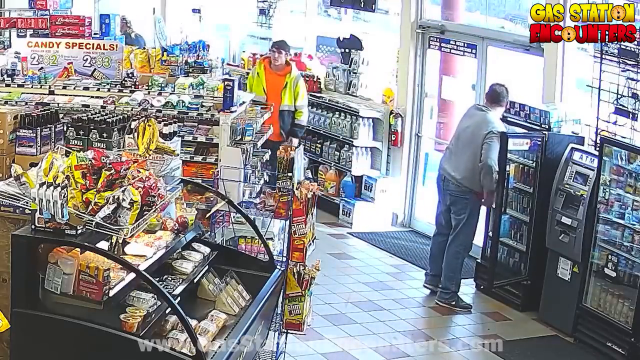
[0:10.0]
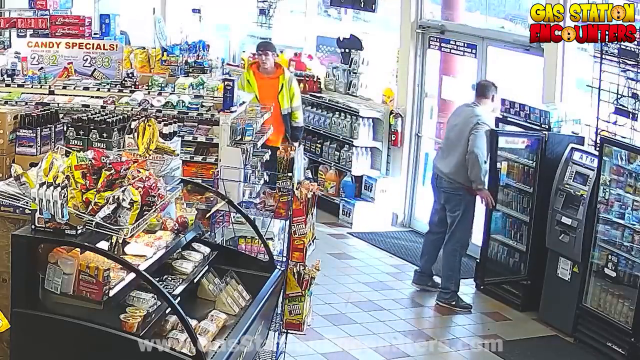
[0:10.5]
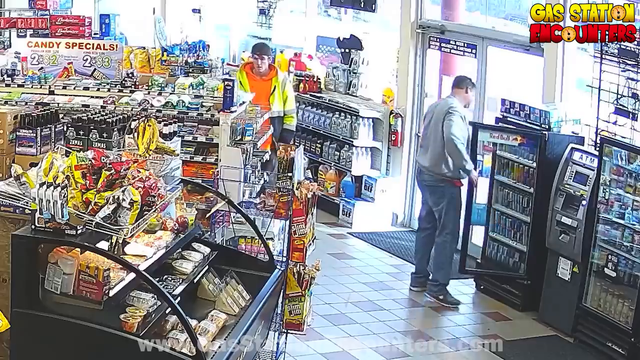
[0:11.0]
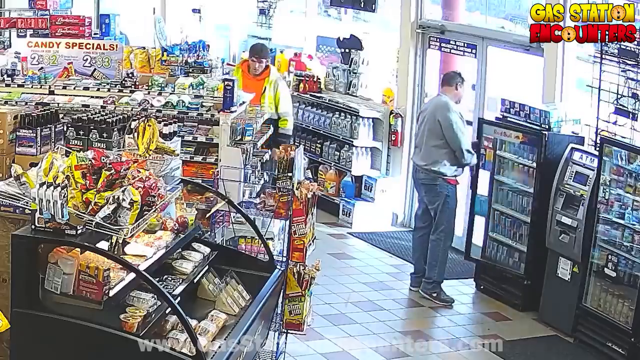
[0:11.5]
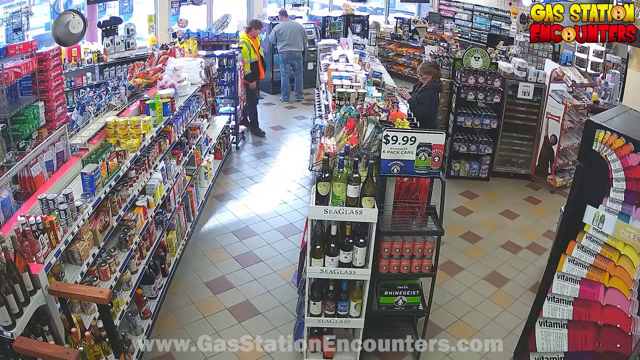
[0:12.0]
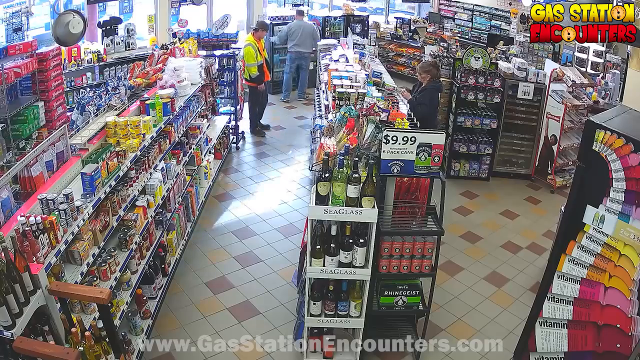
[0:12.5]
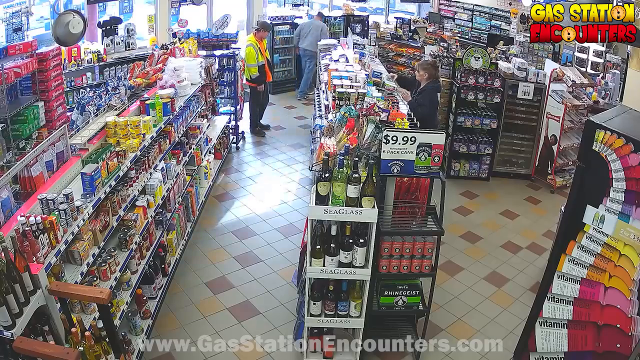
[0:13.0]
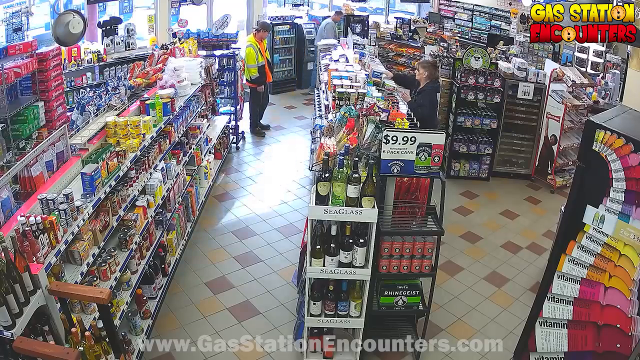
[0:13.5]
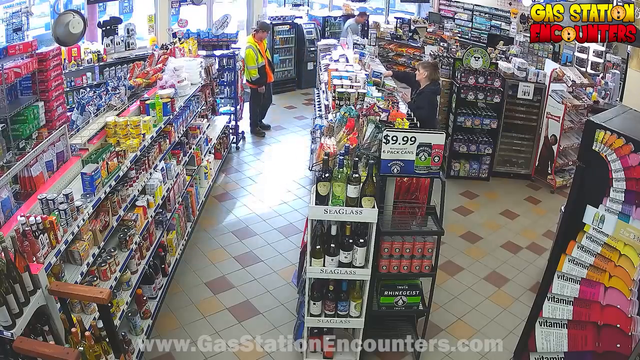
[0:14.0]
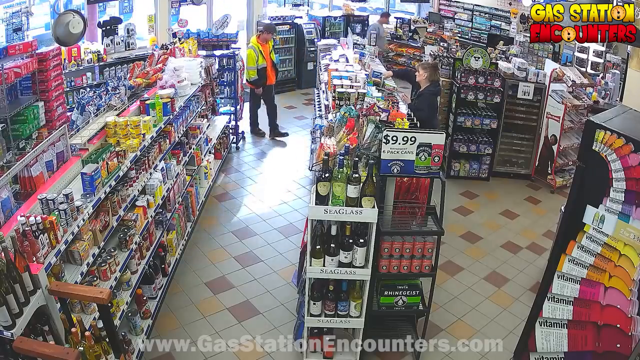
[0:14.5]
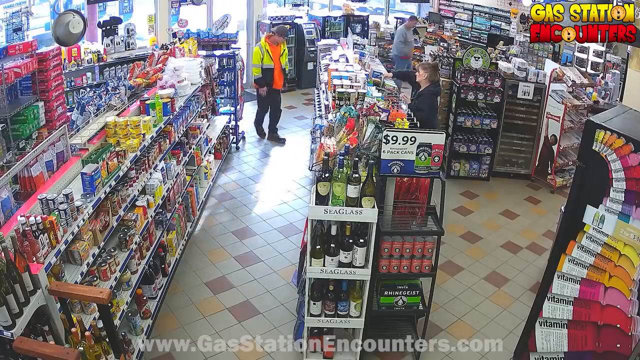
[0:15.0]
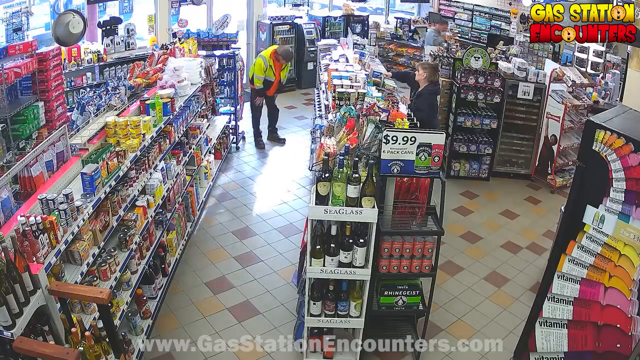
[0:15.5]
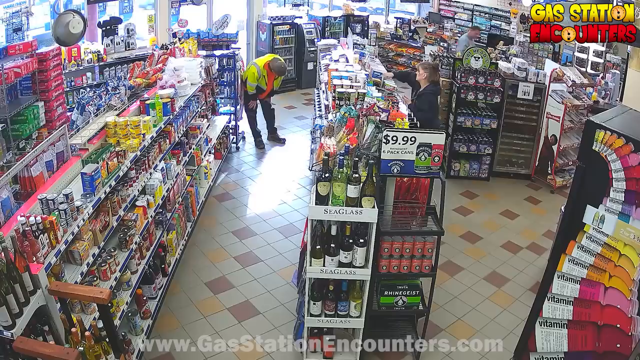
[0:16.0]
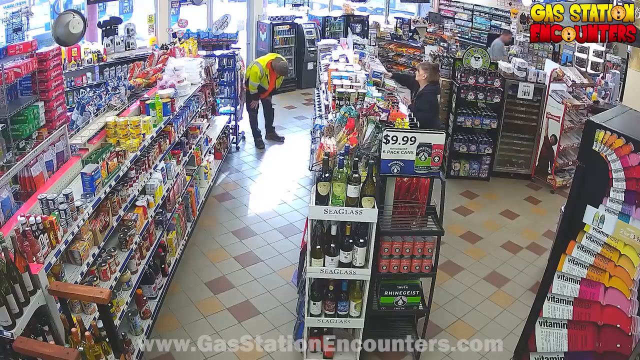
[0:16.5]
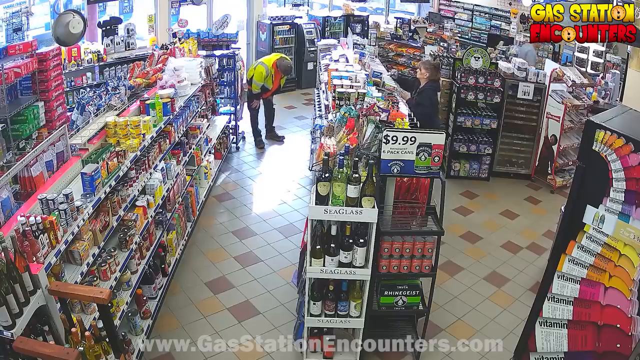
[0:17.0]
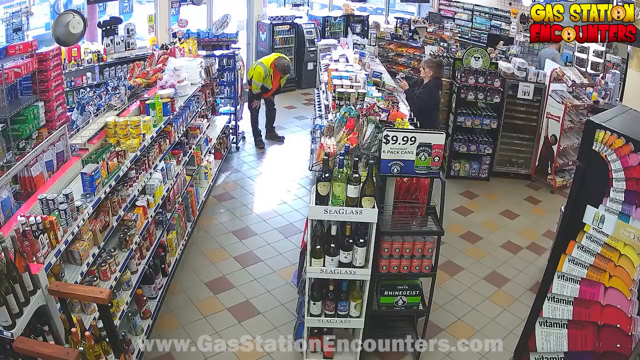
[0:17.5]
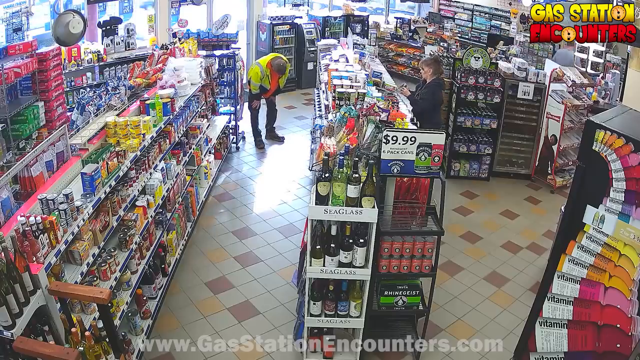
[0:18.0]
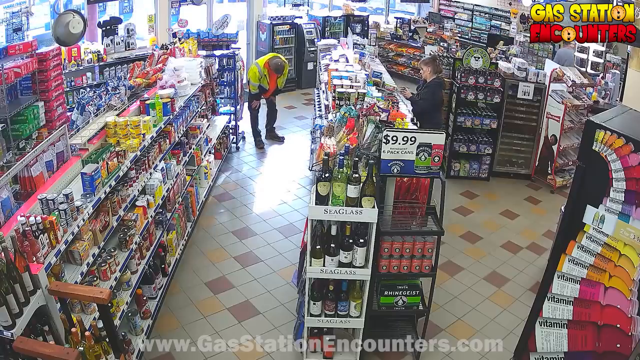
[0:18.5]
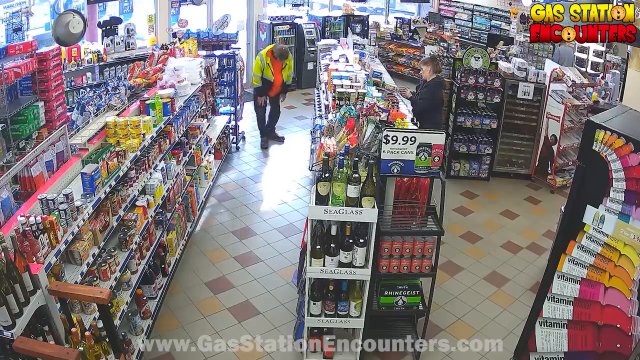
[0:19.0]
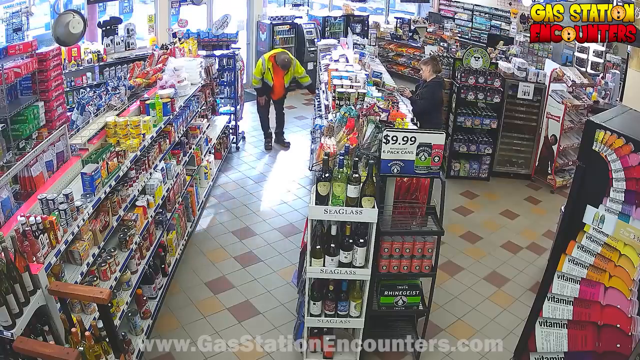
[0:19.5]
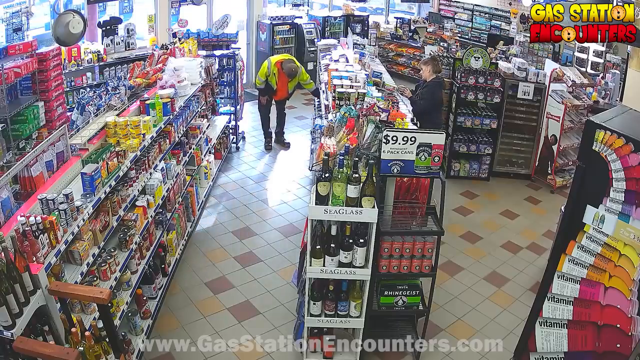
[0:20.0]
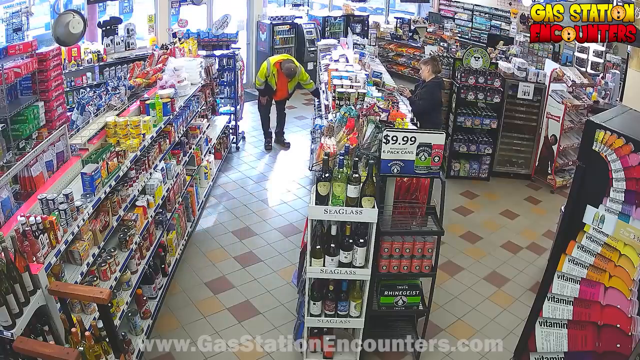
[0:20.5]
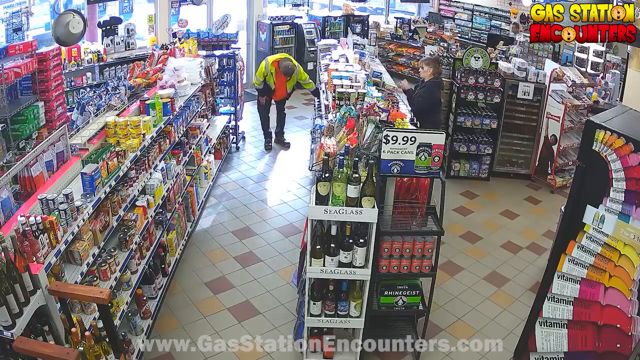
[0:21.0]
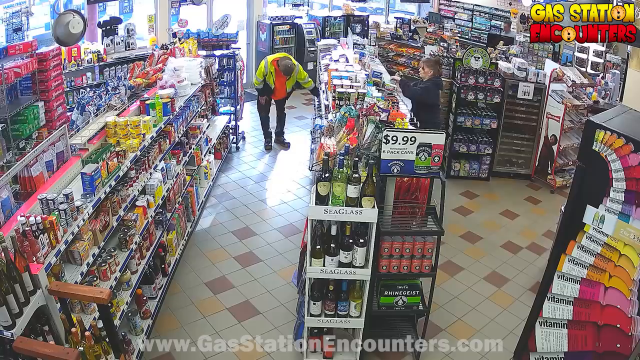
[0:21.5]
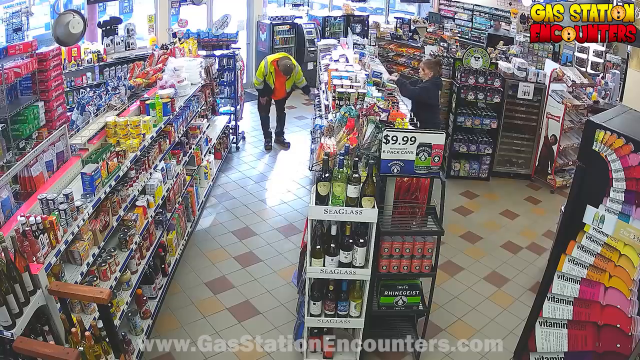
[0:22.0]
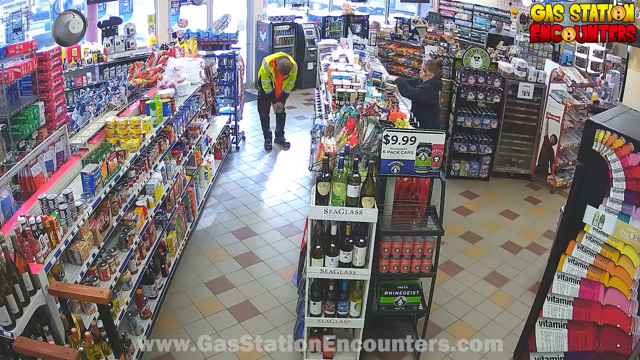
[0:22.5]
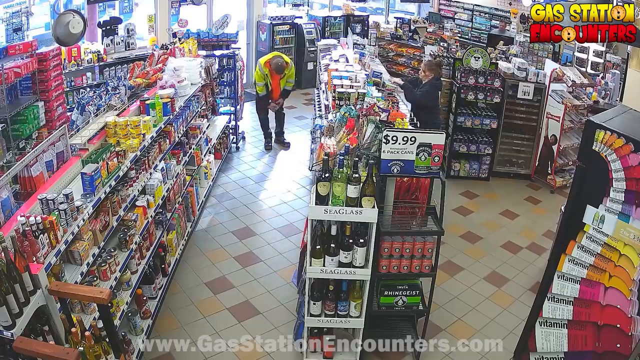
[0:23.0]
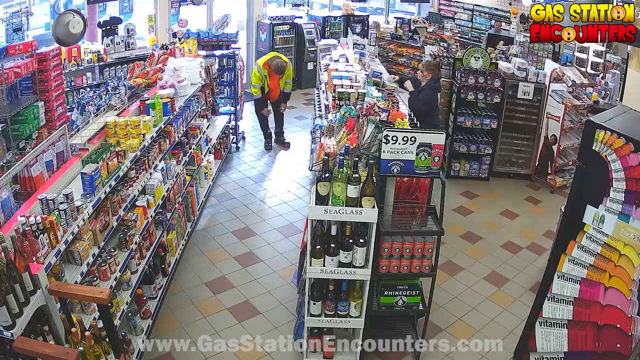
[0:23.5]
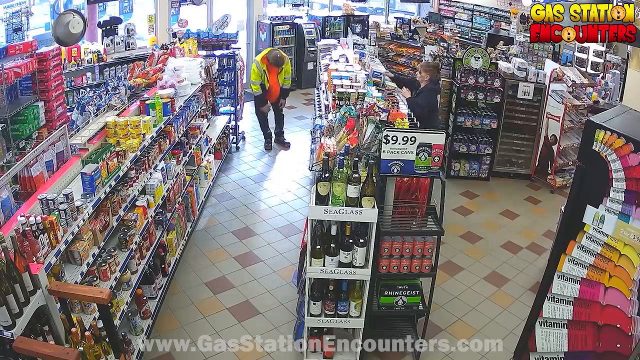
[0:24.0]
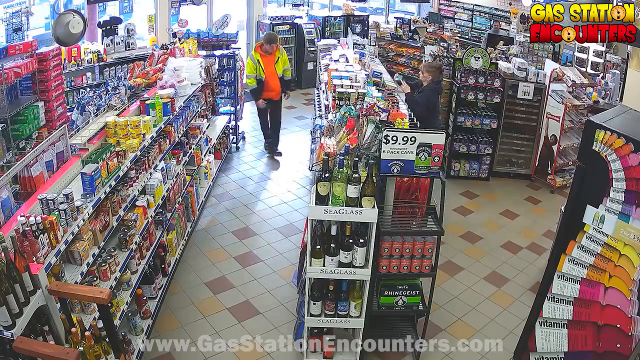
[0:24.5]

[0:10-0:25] The man in the orange sweatshirt and yellow vested jacket is shown from the front. A cut shows the same man from a side view at the end of an aisle, and then the man at the cooler is shown from behind. At the beginning of the aisle, on the camera's side, a sign says "9.99 six-pack cans", with "9.99" in black text. Below that there appear to be various bottles of wine, then what look like red cans, and a green box below that, all on a black rack. To the left, a shelving unit with five shelves holds what appear to be various drinks and various other items. The man takes something from the aisle as if he is just shopping normally, and on the opposite side of the aisle, on the right, a woman in a black jacket looks at an item and then puts it back on the shelf.